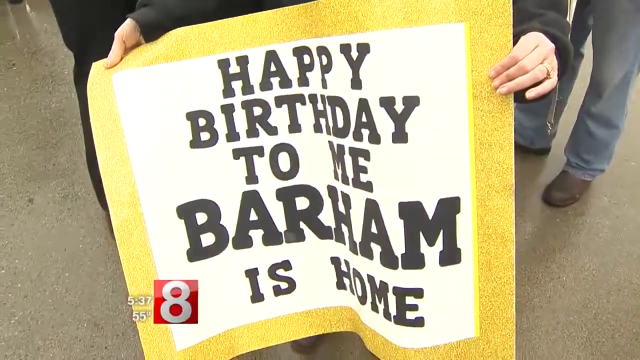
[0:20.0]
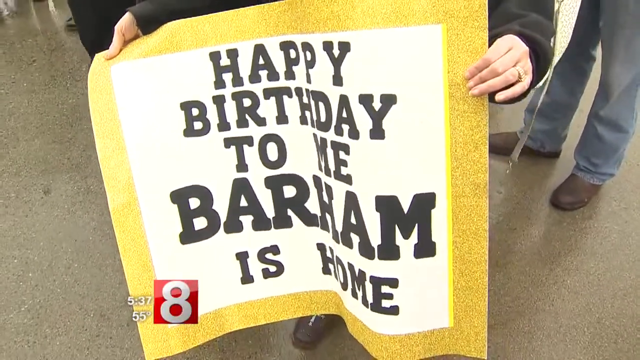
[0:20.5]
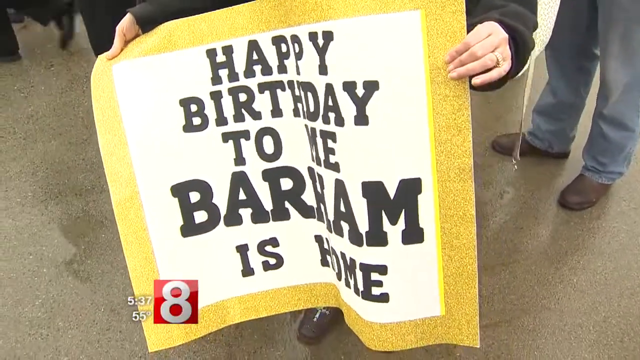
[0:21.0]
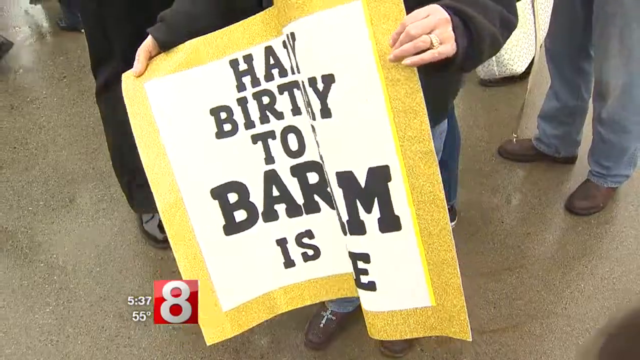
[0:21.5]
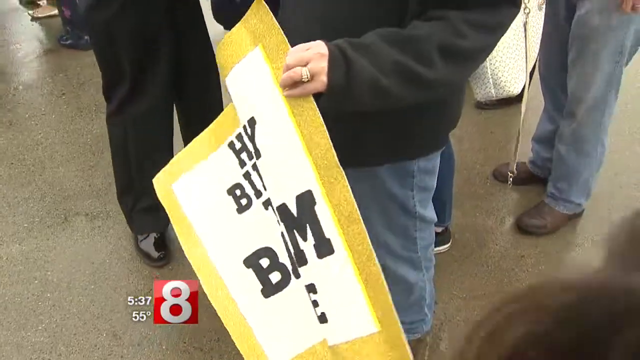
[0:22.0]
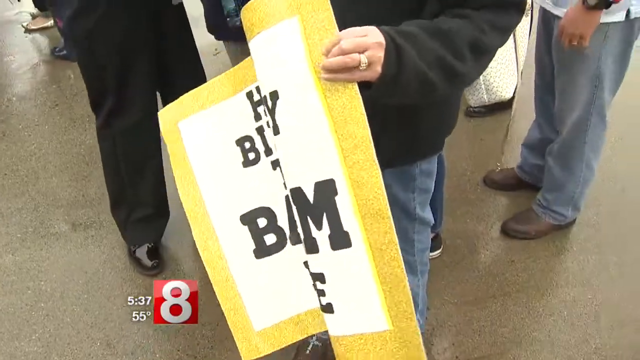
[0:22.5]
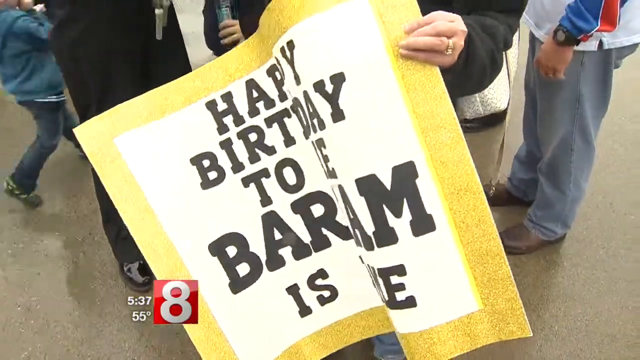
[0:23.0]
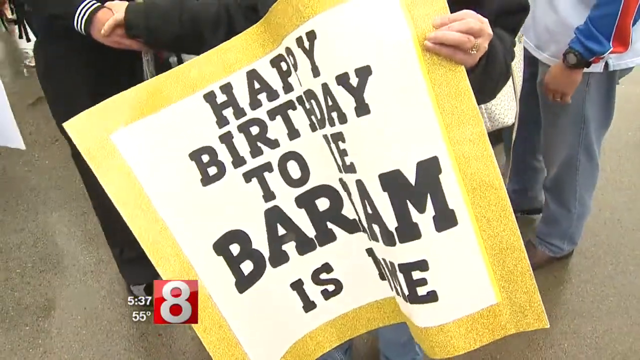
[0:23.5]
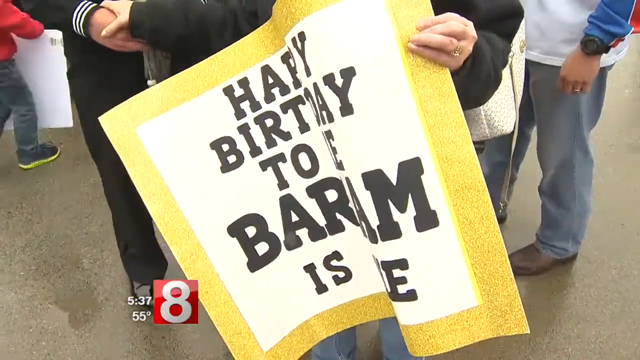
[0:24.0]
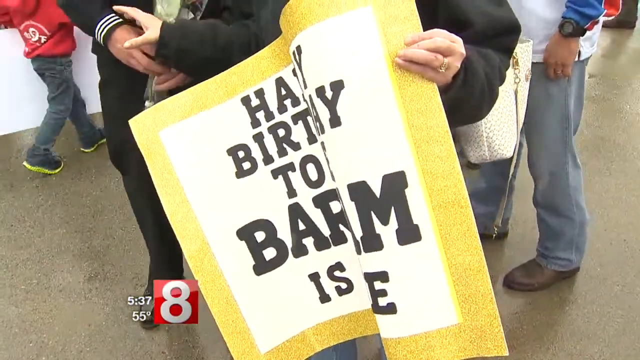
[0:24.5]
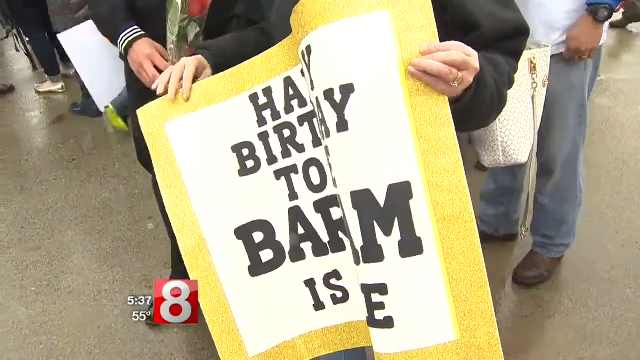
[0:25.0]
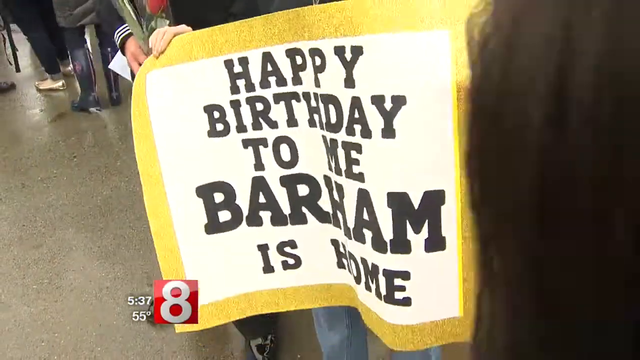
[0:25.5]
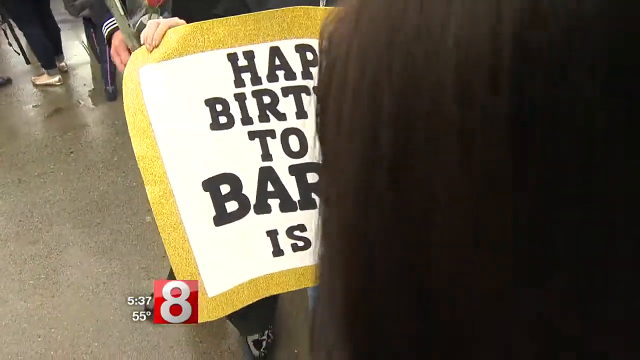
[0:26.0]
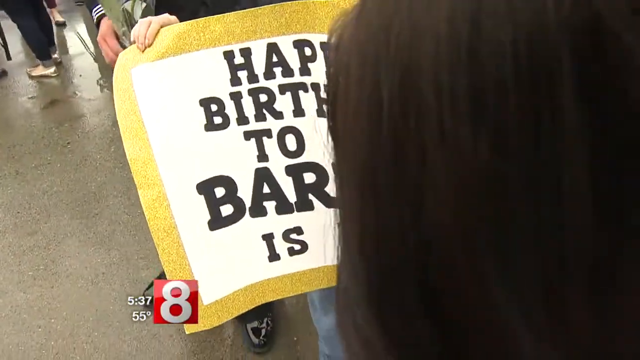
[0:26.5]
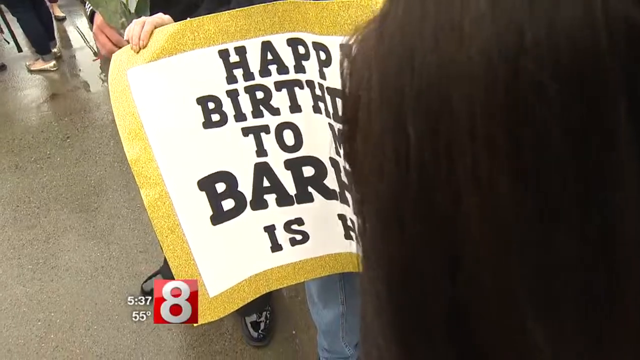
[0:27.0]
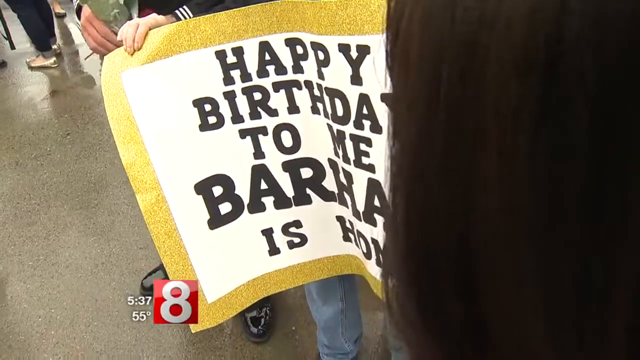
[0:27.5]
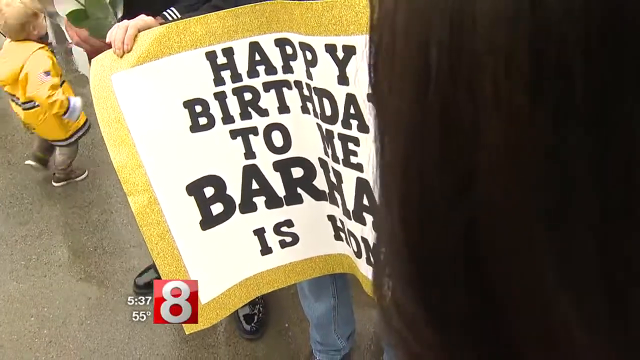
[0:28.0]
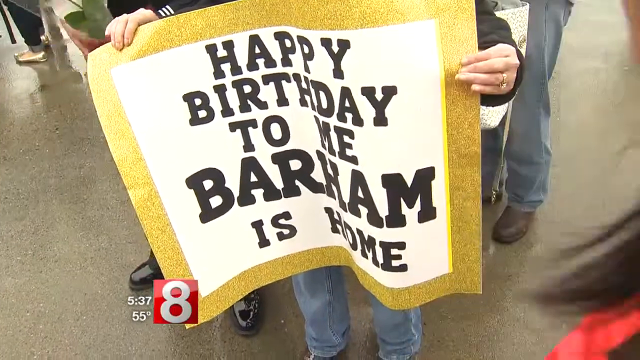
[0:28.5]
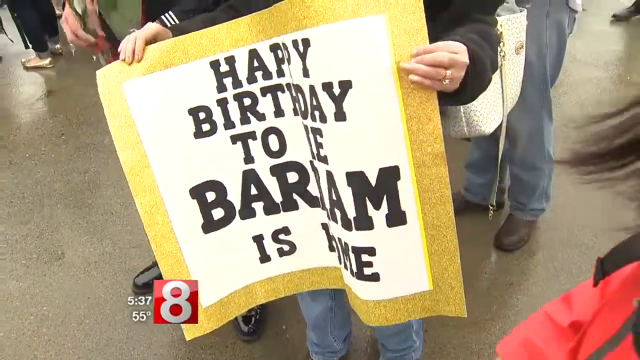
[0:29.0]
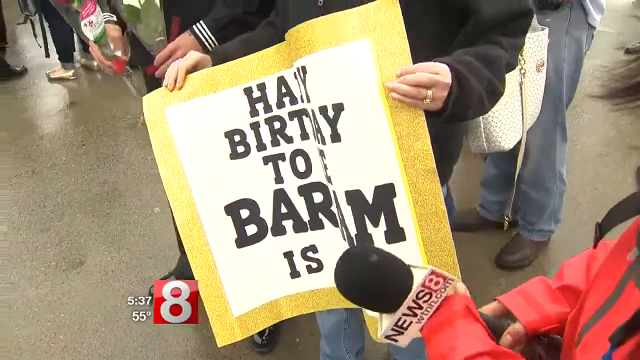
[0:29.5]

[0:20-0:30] A person holds up a sign reading "happy birthday to me, Barham is home." The camera shows the lower portion of a sailor with a rose in his hand; no torso or faces are visible, only hands and legs, with the sign predominant in the shot. Behind them, the feet of other people walk by, some of them holding signs. A little boy, a toddler, wears a raincoat. It is rainy, or was previously raining, and the day is overcast. Part of the reporter is visible with her microphone; she wears a red parka and has brown hair.